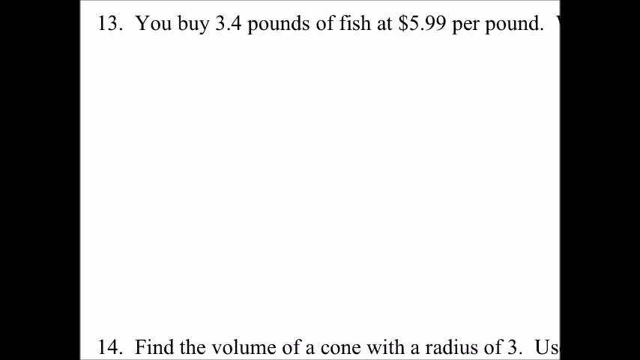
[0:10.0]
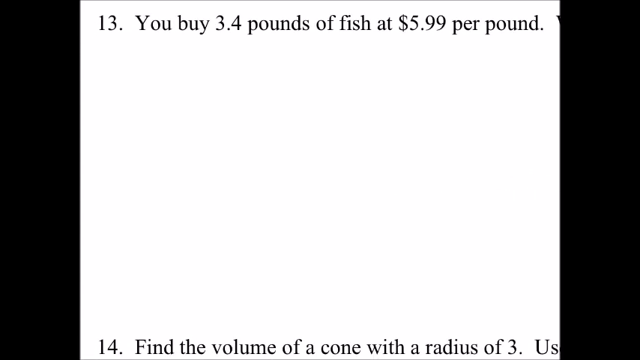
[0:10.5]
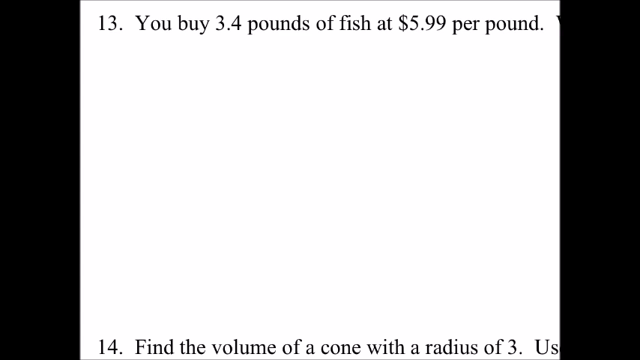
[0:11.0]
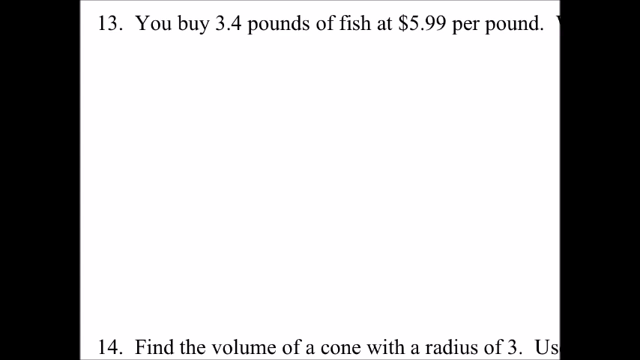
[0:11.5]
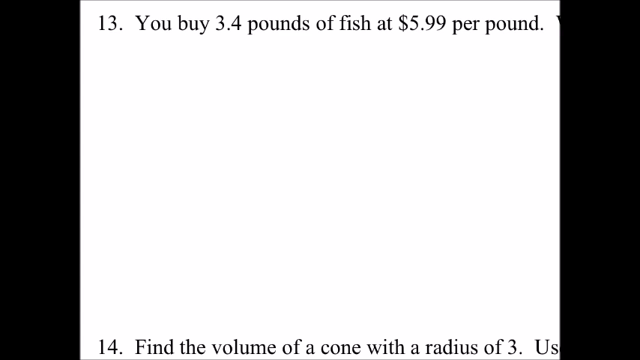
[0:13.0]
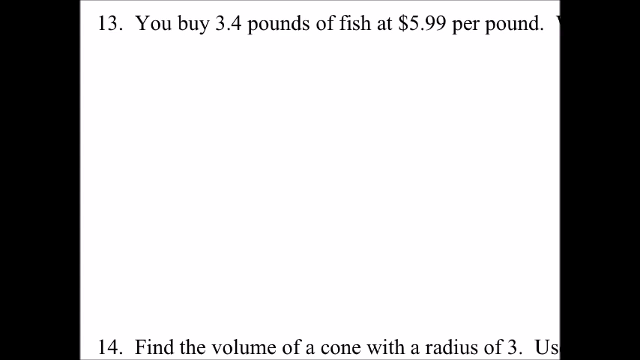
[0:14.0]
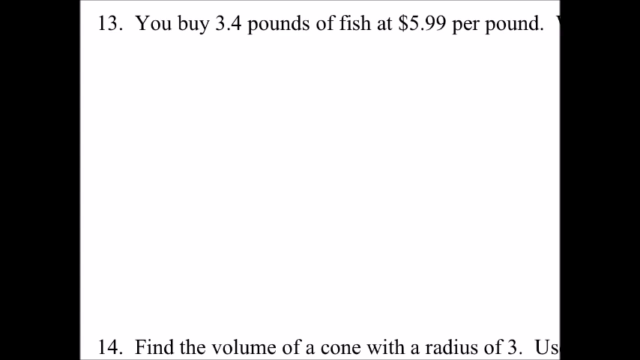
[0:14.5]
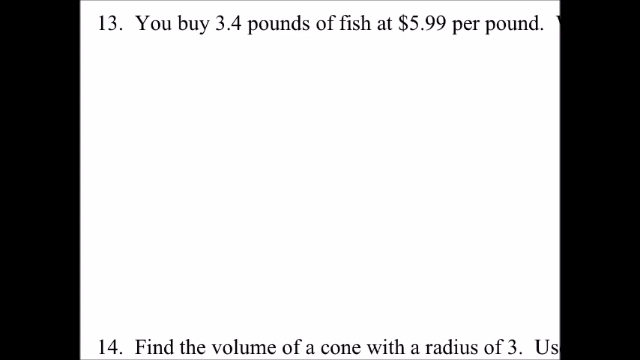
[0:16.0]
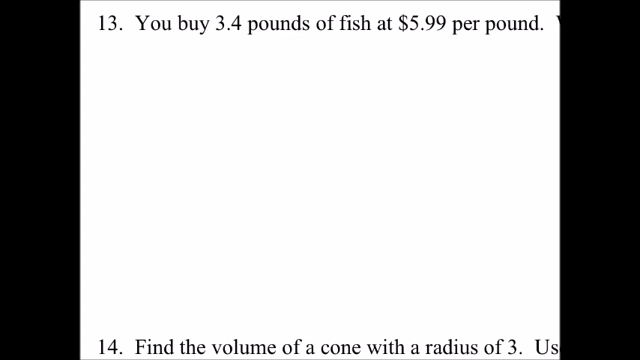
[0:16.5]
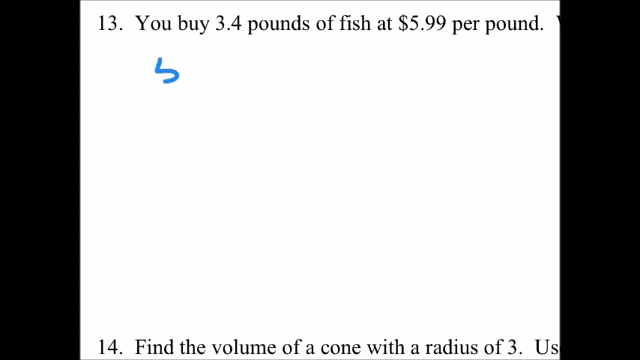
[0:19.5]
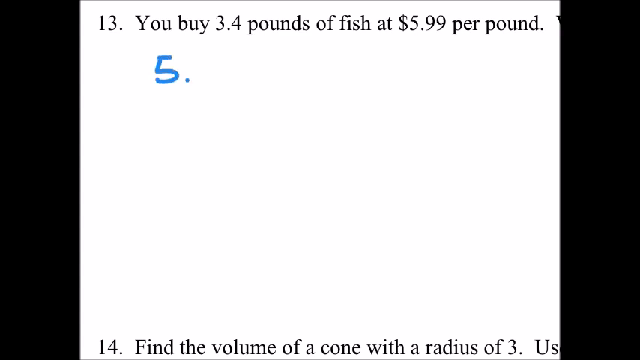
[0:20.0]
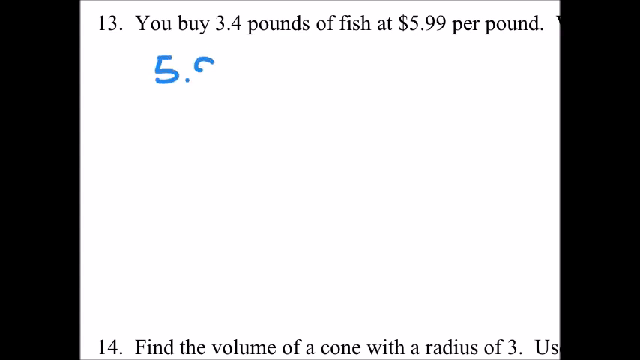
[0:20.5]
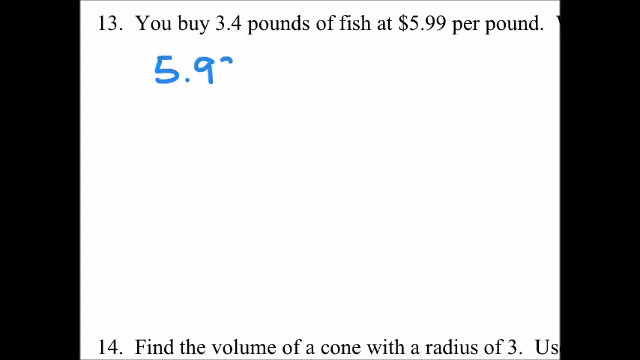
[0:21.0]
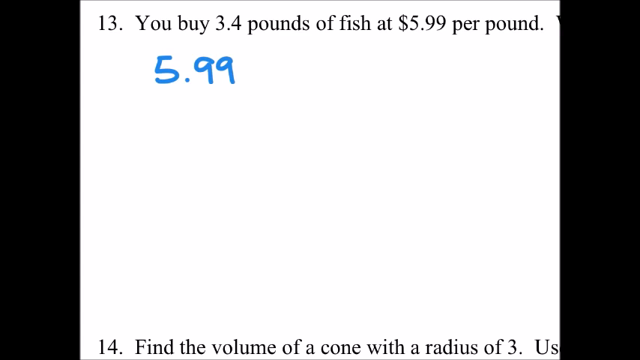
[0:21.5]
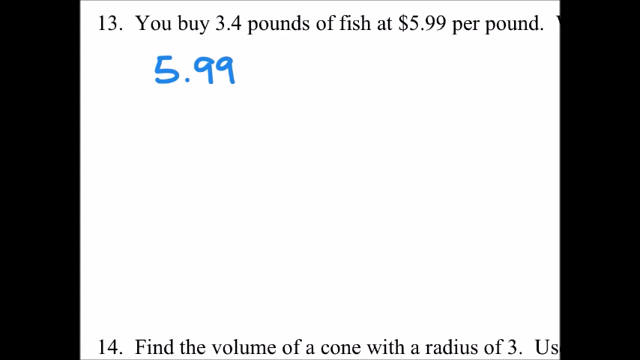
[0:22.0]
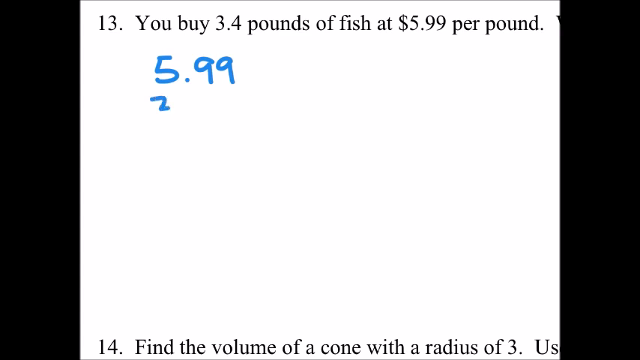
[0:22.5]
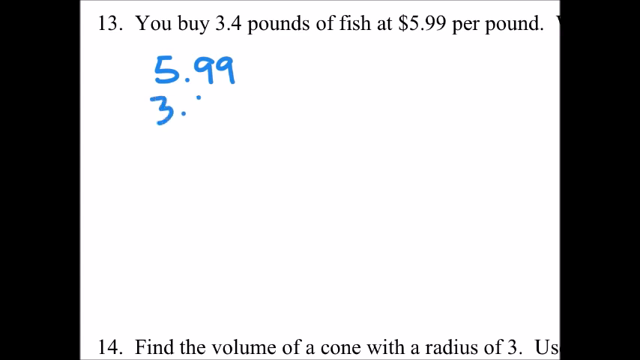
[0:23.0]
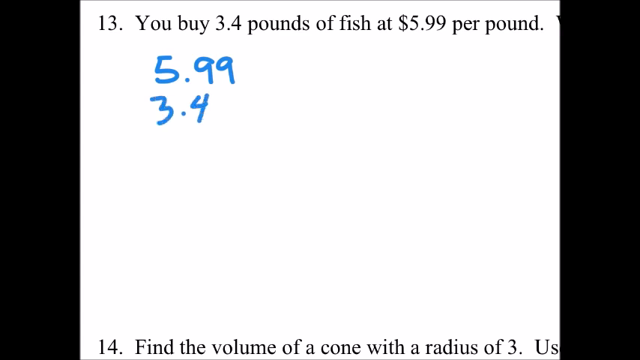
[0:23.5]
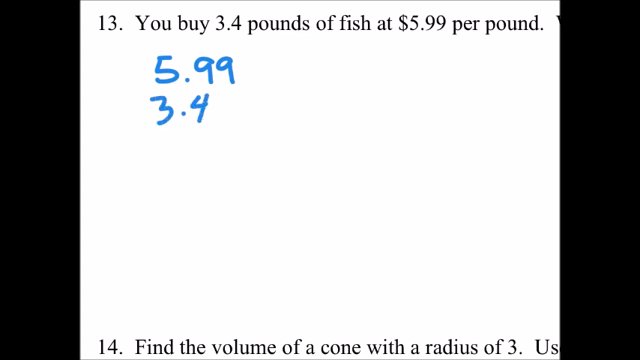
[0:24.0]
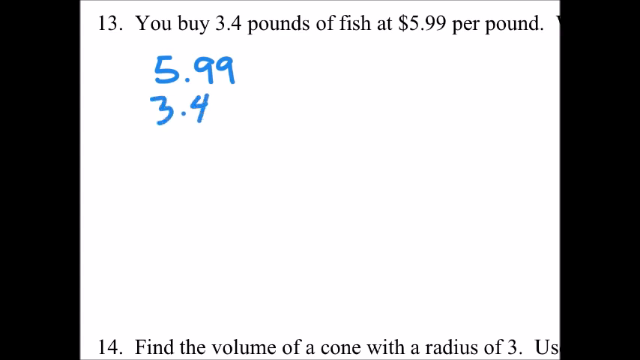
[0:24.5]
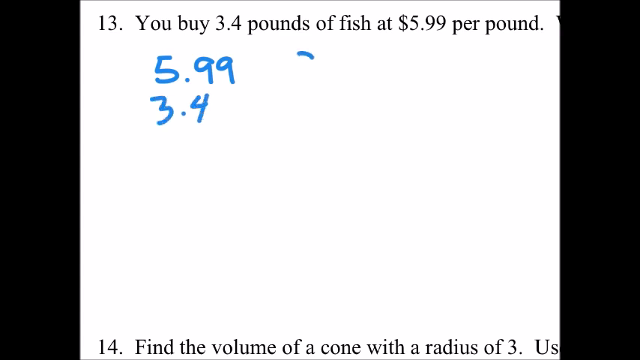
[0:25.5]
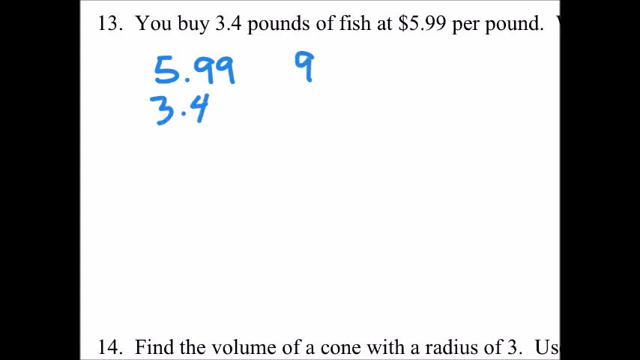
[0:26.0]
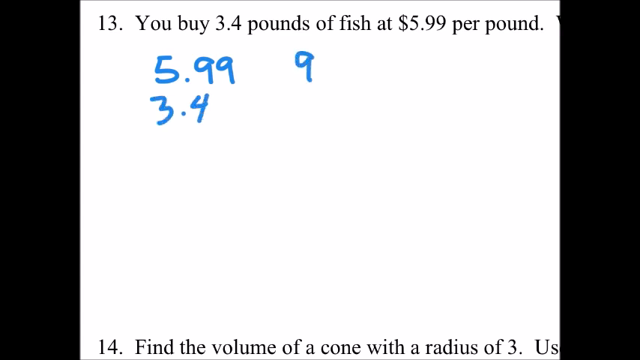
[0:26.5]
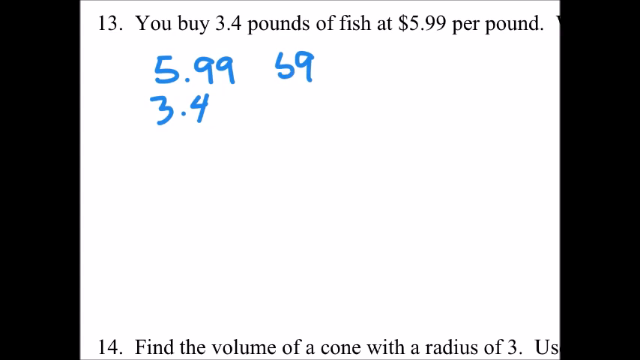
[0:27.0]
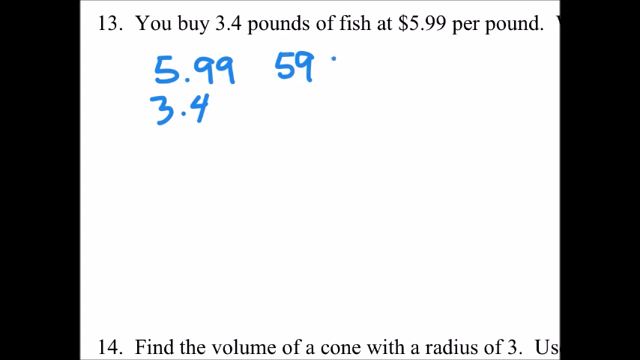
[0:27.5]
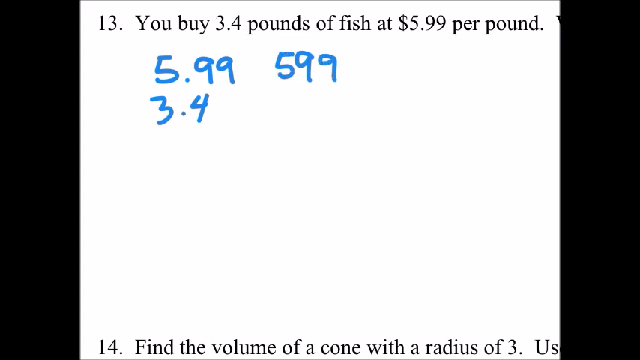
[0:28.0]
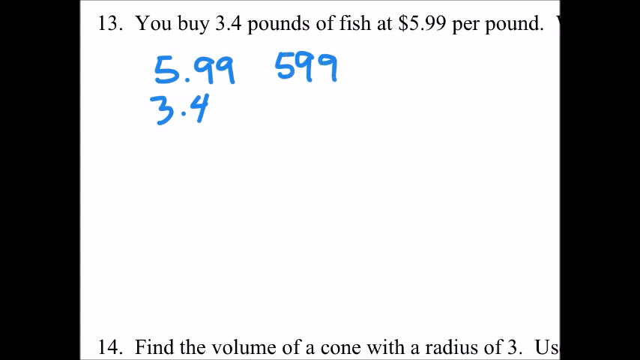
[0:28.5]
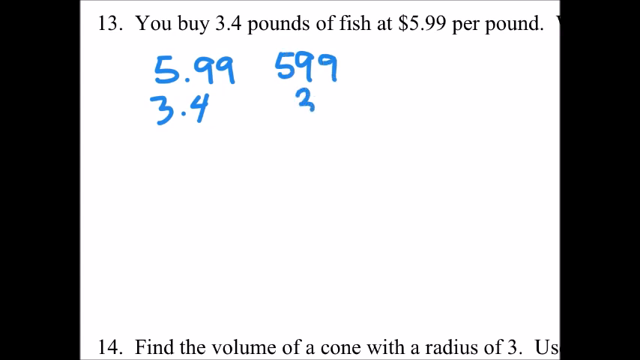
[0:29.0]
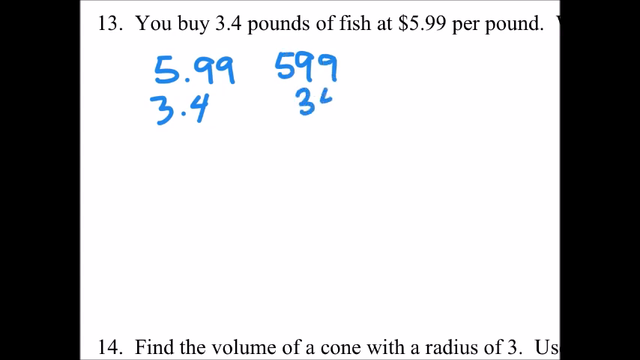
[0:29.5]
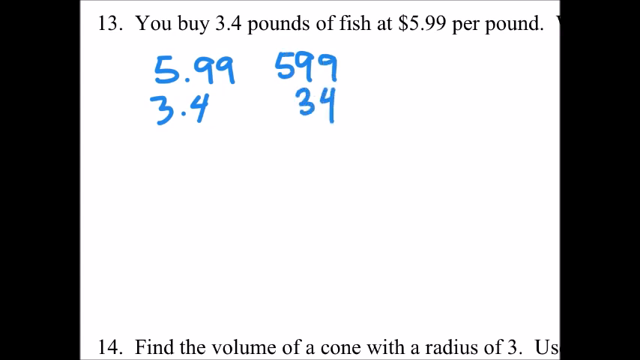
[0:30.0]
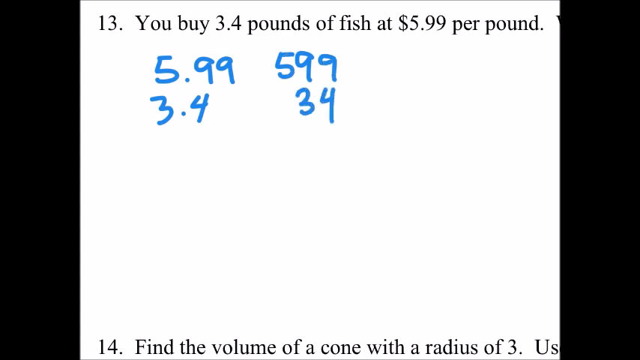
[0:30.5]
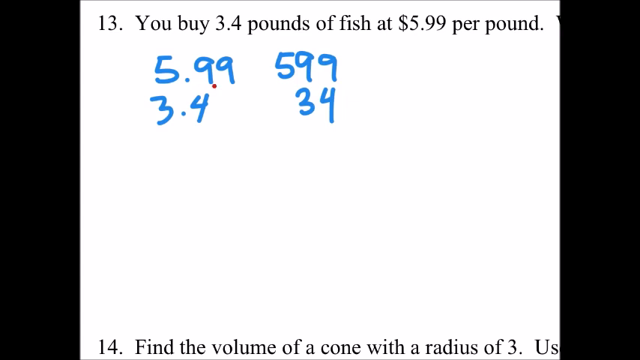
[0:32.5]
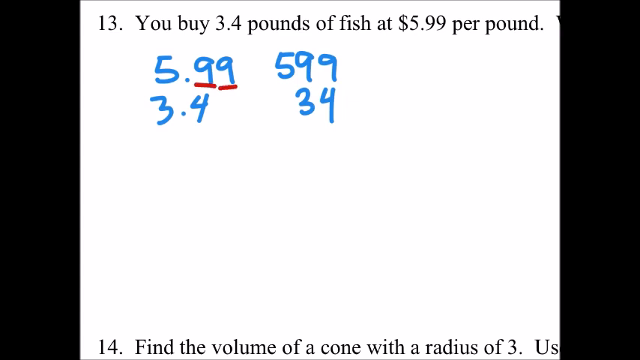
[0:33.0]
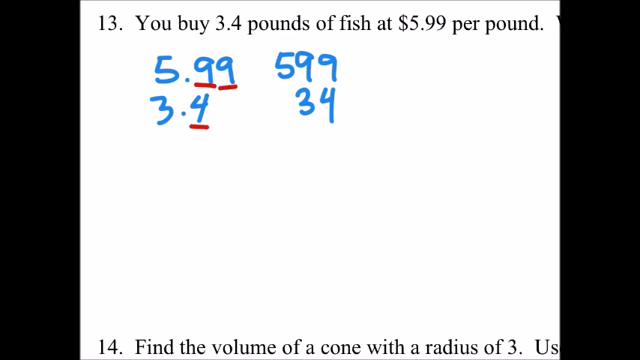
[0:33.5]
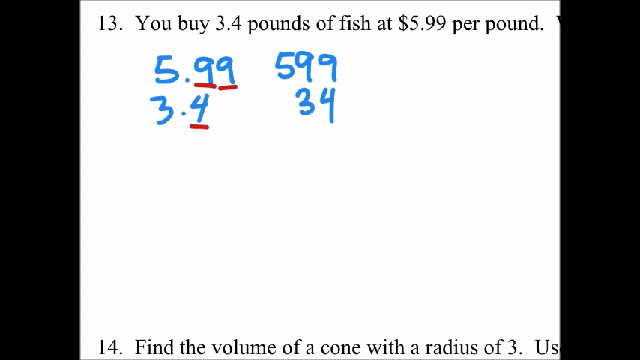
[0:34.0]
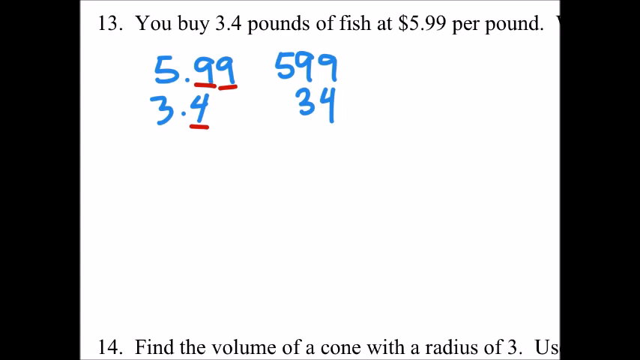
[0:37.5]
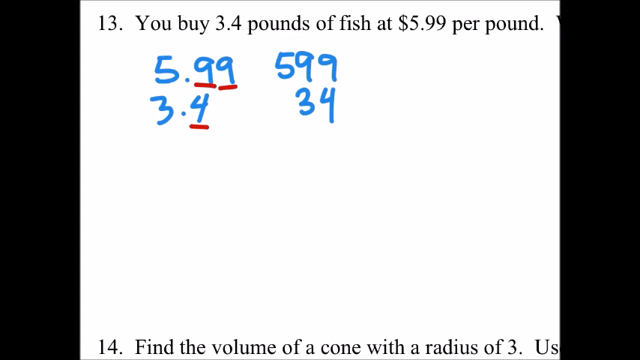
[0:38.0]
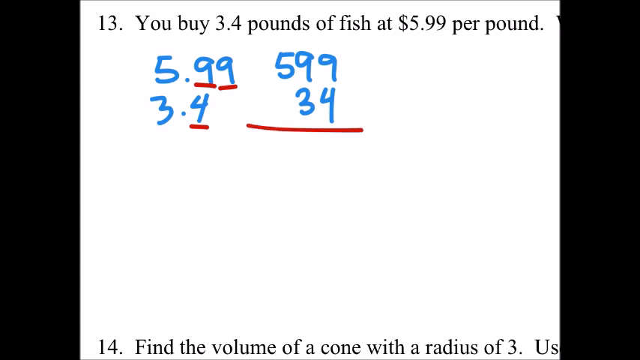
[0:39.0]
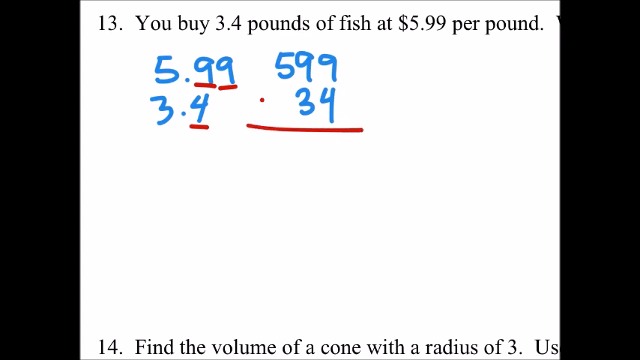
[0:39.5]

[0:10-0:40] What appears to be a black background surrounds a white screen in the center, with slight gradients of gray that turn almost back to black at the bottom. A number 13 appears with the statement "you buy 3.4 pounds of fish at $5.99 per pound." At this point nothing else is in the white area. Further down, a number 14 says "find the volume of a cone with a radius of 3." Only these two questions are maximized in the center. Under number 13, 5.99 is written in blue, with 3.4 written under it. Beside 5.99, 599 is written, and beside 3.4, 34 is written. Three red underlines appear under the 9, the 9 and the 4 of the problem on the left. Then a large underline and a minus sign appear under the second math problem, the one on the right.